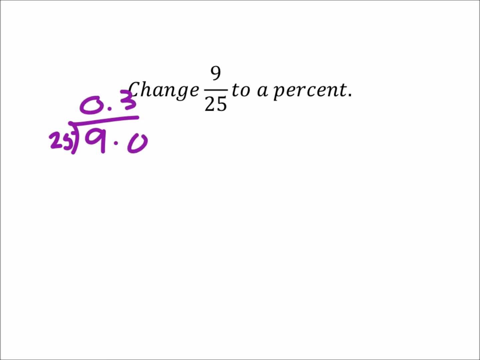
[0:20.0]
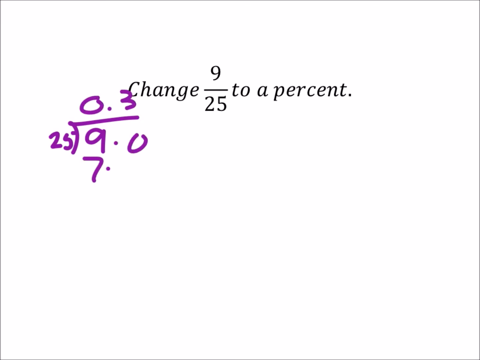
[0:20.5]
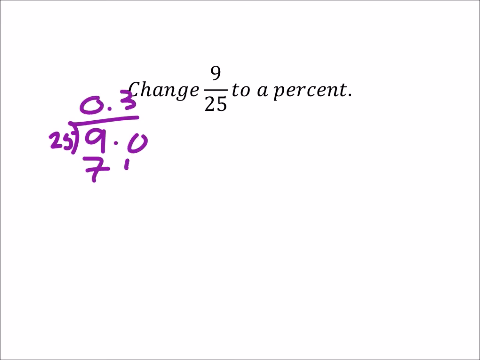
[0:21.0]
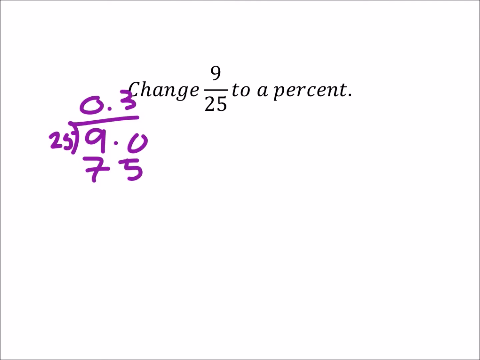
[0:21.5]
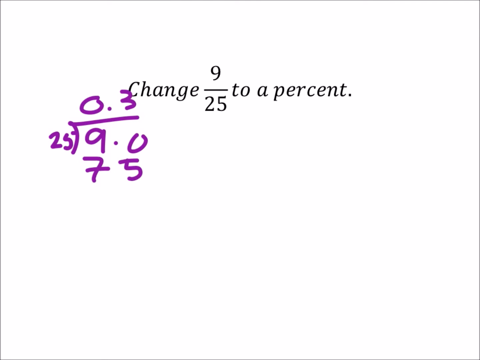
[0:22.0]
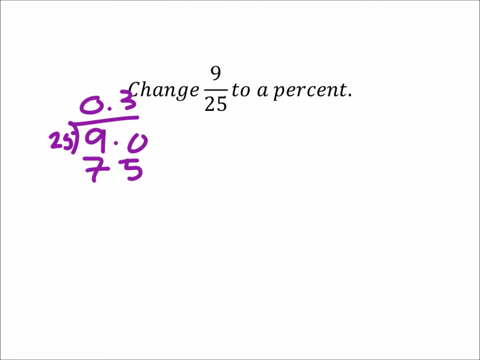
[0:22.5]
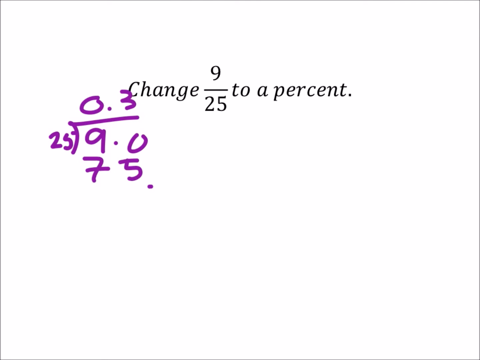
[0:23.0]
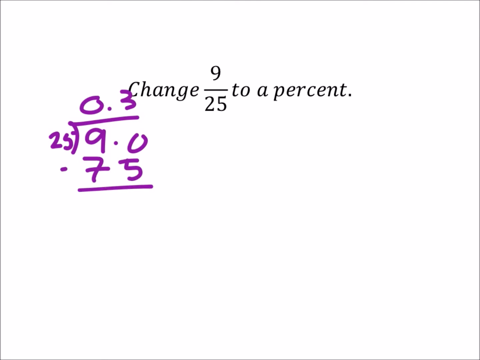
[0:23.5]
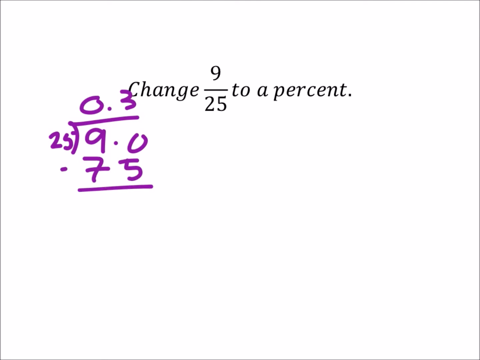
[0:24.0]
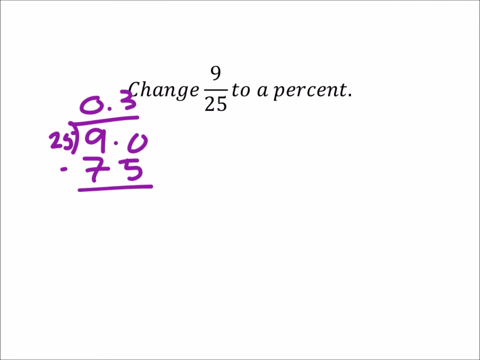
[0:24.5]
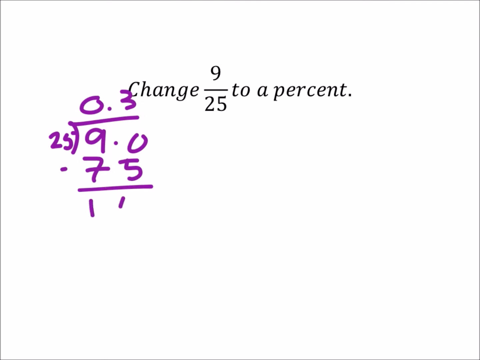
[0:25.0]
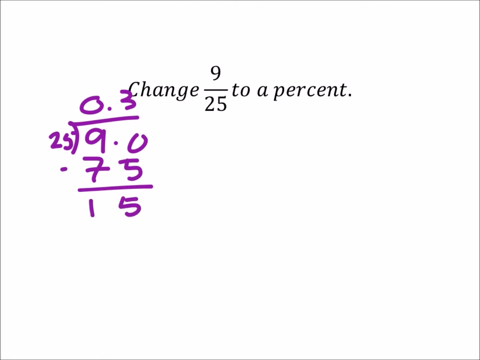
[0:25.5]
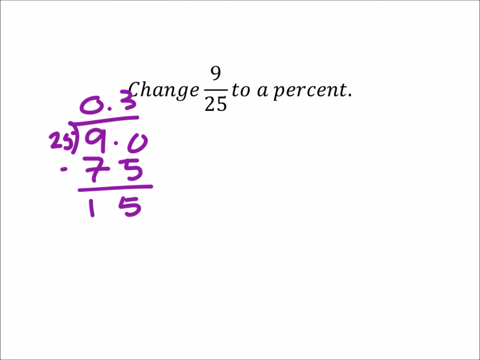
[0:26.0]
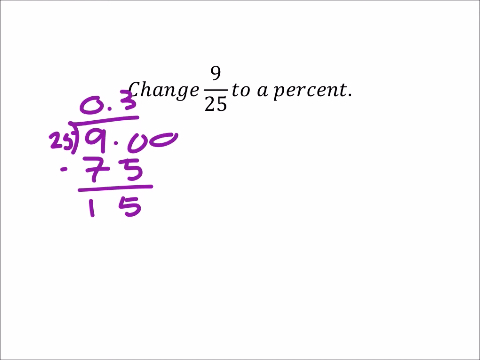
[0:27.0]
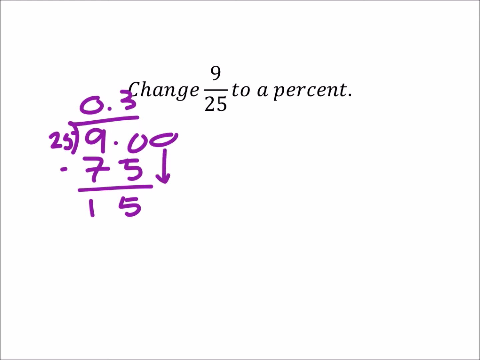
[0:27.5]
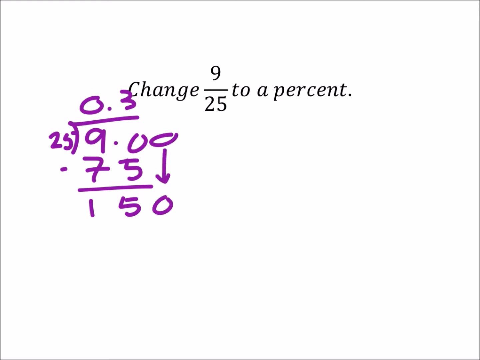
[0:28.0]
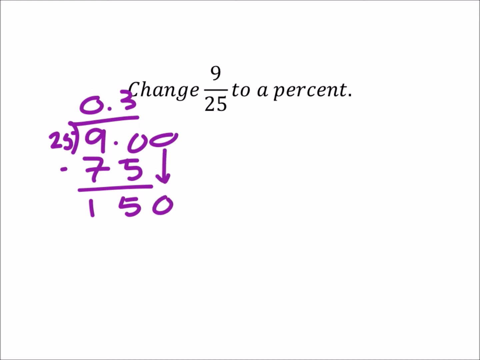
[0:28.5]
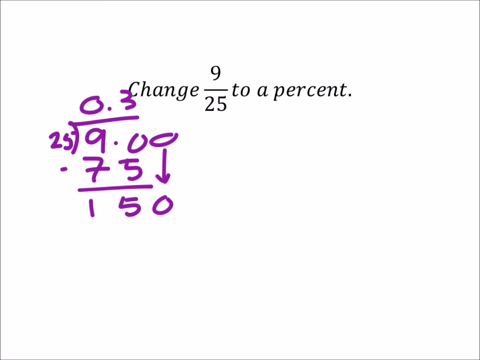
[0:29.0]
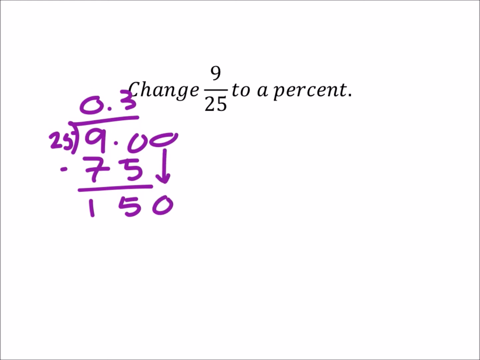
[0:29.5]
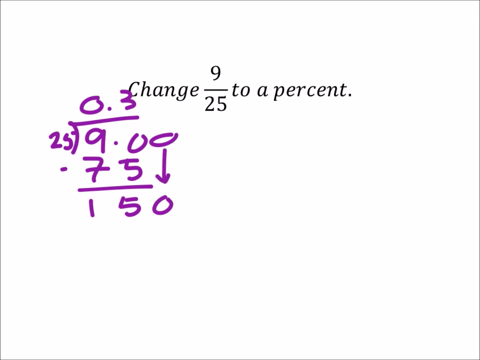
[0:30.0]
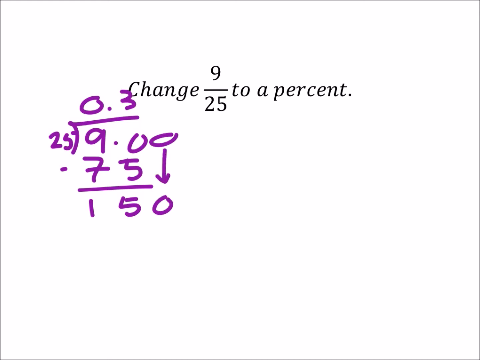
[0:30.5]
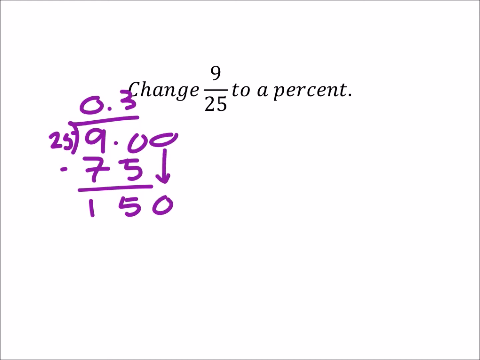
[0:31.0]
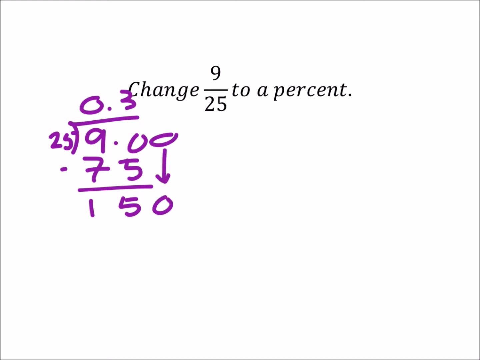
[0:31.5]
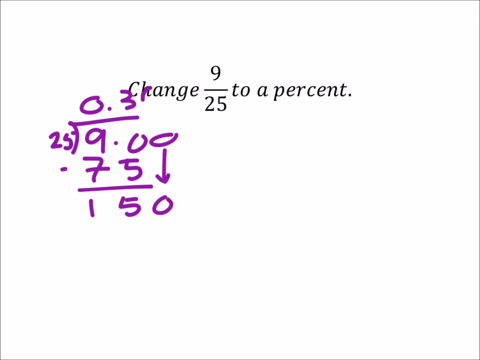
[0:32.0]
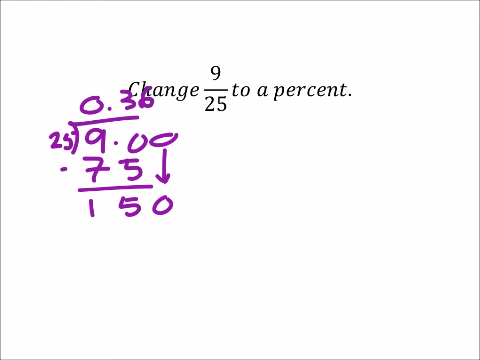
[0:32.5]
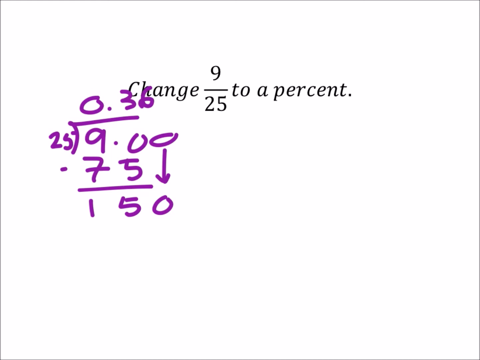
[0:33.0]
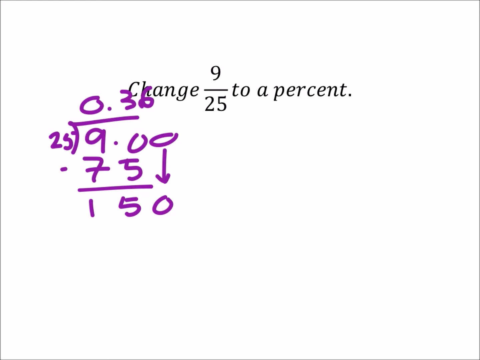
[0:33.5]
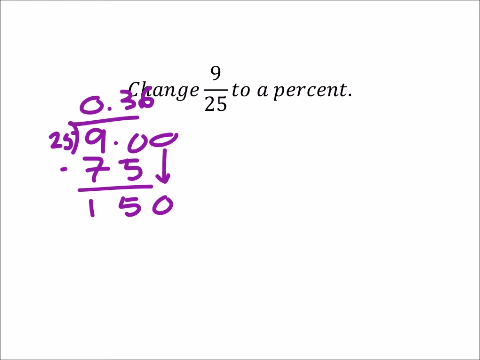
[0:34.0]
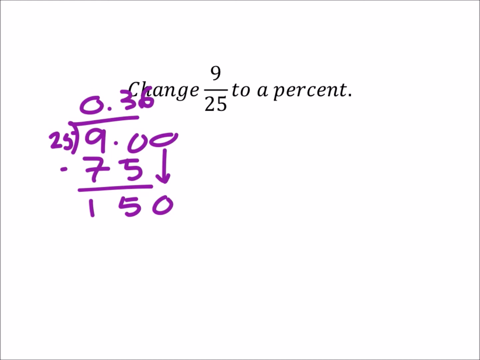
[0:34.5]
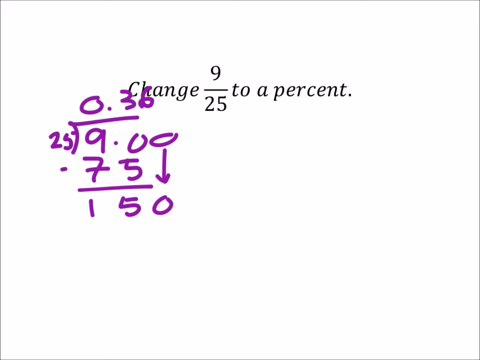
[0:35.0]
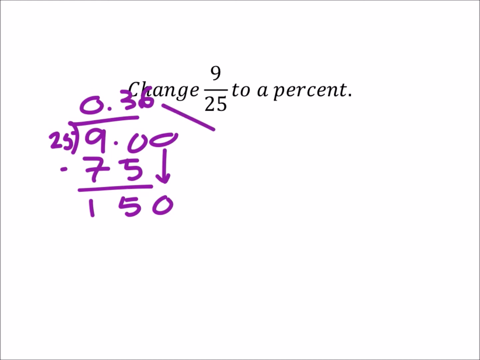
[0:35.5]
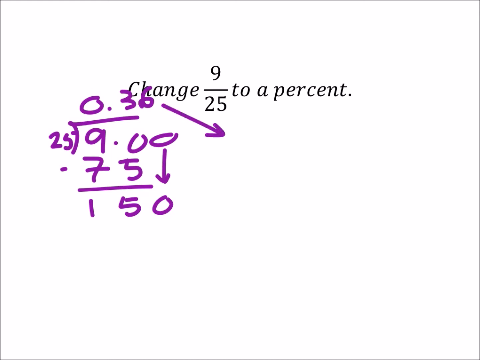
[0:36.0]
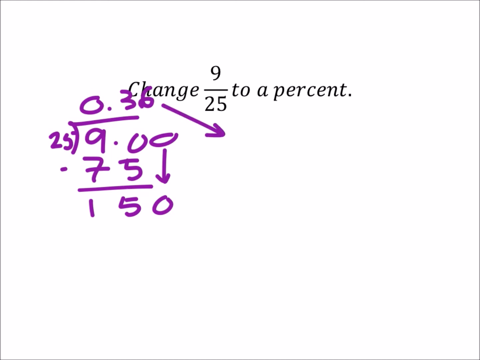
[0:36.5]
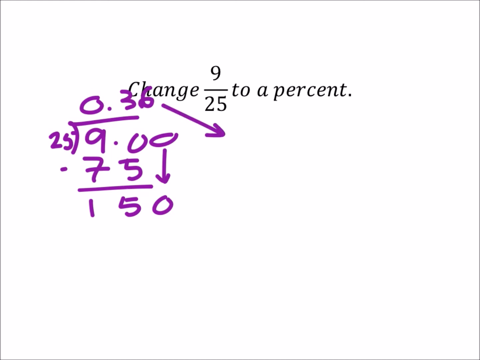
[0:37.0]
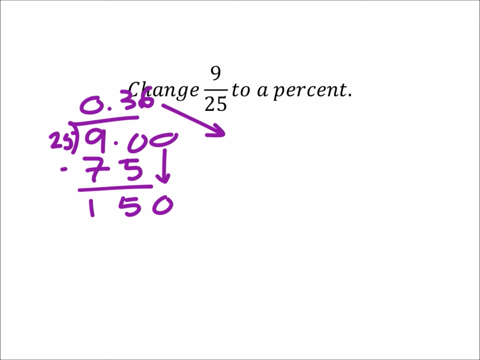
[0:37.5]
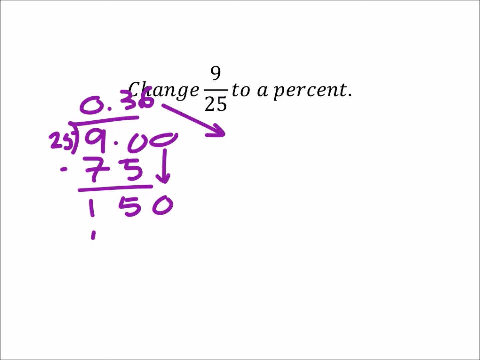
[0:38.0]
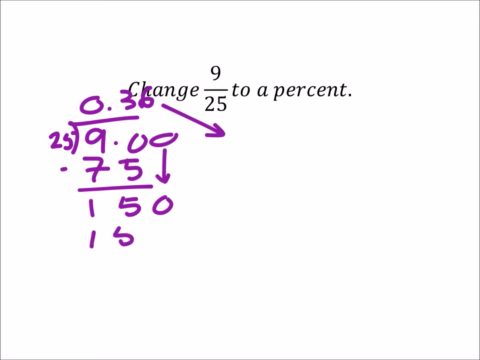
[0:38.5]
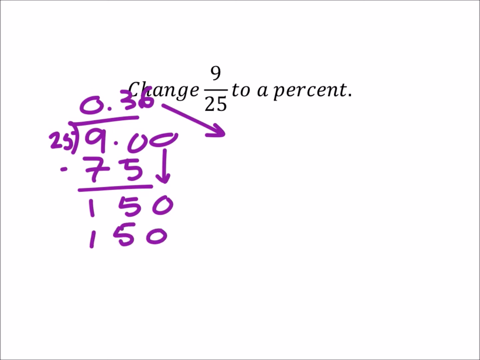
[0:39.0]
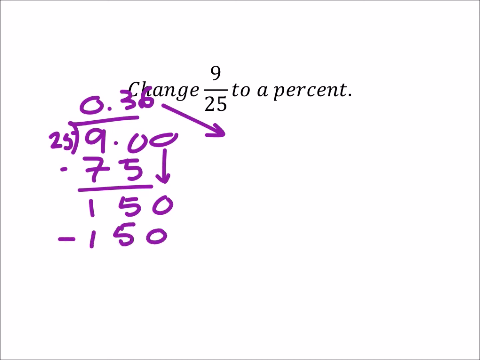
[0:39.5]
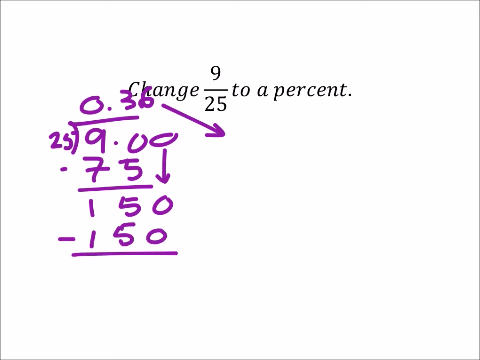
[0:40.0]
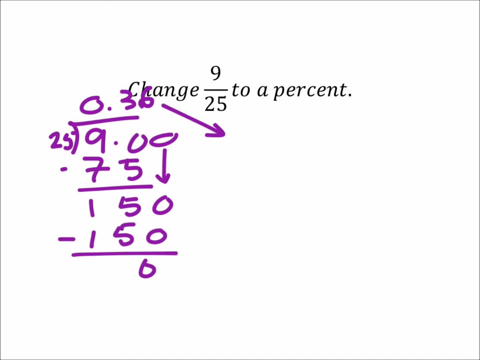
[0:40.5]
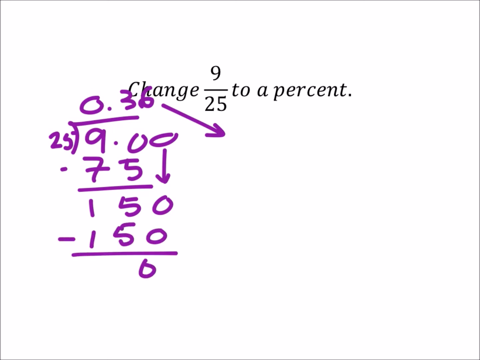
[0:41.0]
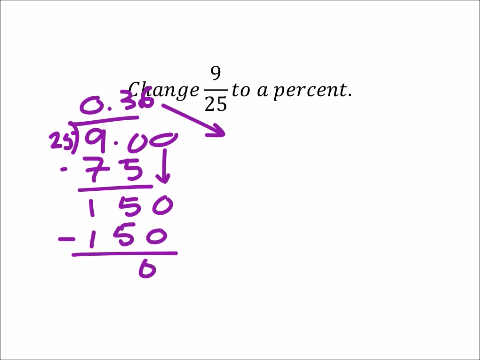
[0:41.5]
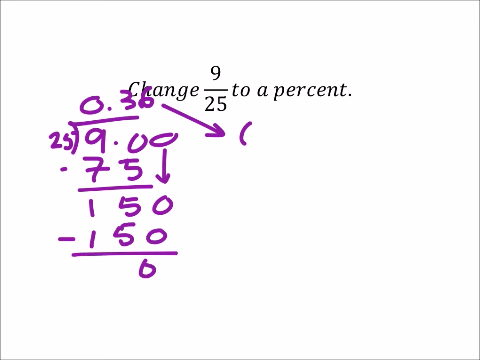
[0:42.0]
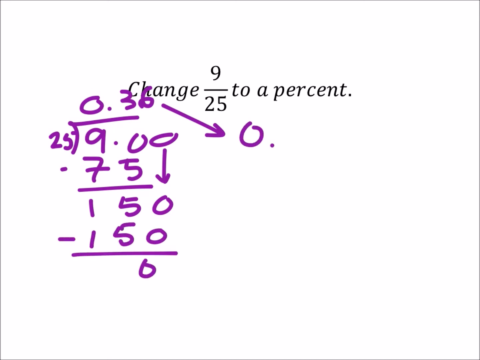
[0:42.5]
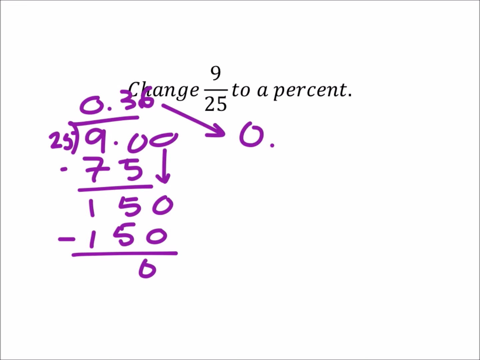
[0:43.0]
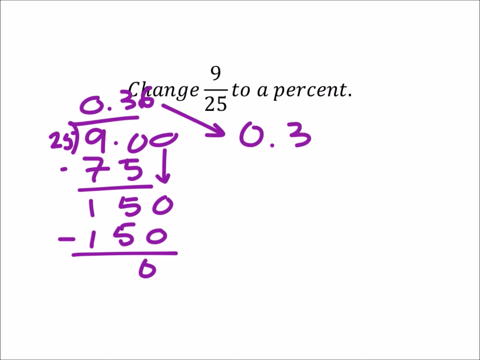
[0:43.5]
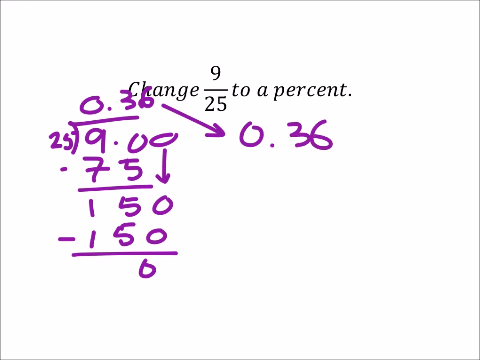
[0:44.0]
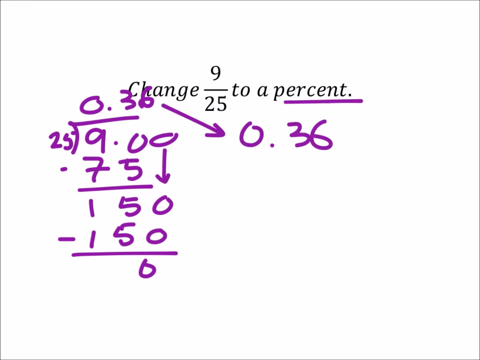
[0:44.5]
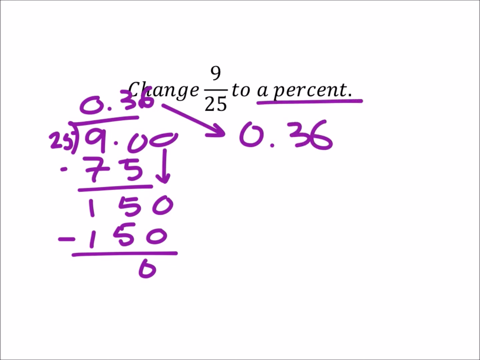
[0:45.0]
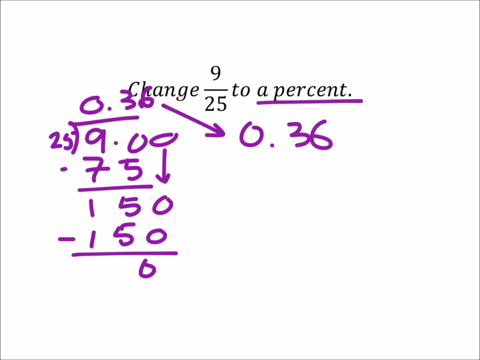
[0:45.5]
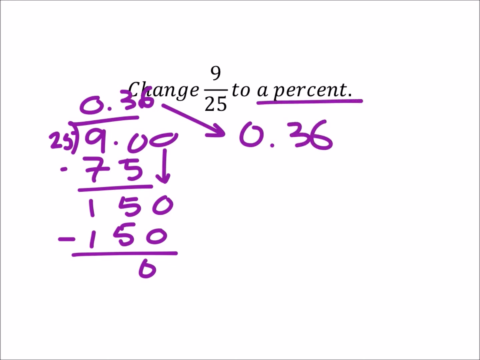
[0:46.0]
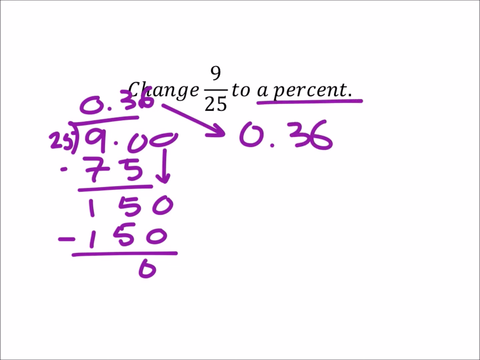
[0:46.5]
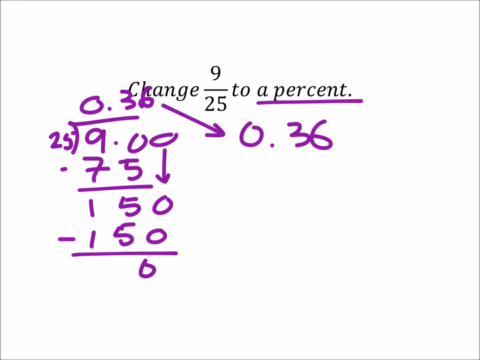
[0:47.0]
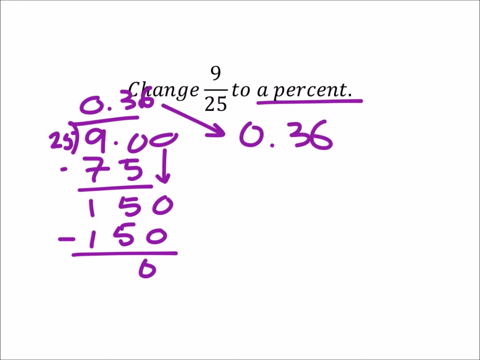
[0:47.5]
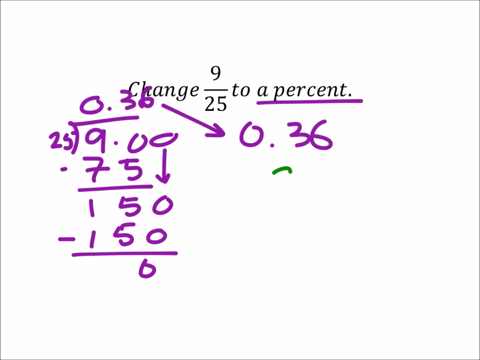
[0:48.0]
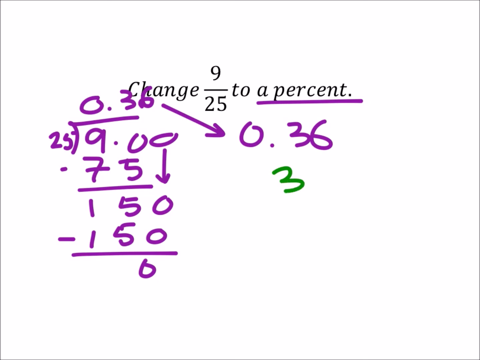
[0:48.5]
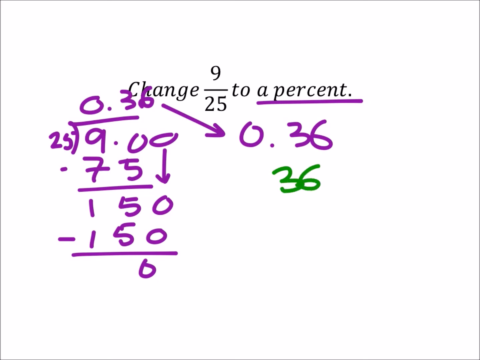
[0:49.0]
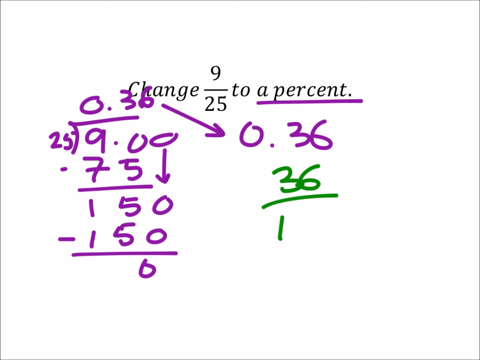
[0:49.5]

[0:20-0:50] The screen keeps its simple white background, with black italic text at the top reading "Change 9 over 25 to a percent". Below it and slightly to the left, purple cursive handwriting shows 25 with a long division symbol, then 9.0, with 0.3 on top. A 7 and a 5 are added below the 9.0, with a minus sign to their left, and a horizontal line is drawn below the 75. Below the line the figure 15 appears. A downward-pointing arrow is added to the right of the 75, and a 0 is added to turn the 15 into 150. A 6 is added to the 0.3, making it 0.36. A diagonal arrow is drawn from the right-hand side of that 6, heading down toward the lower right. Another 150 is added below the first one, with a minus sign to its left and a horizontal line beneath it, and a 0 is written beneath, lined up with the 0 in the last 150. The number 0.36 is written at the end of the downward diagonal line. The text "a percent" is underlined in purple. Green cursive handwriting then adds 36, underlined, below the last 0.36, and 10 below that.